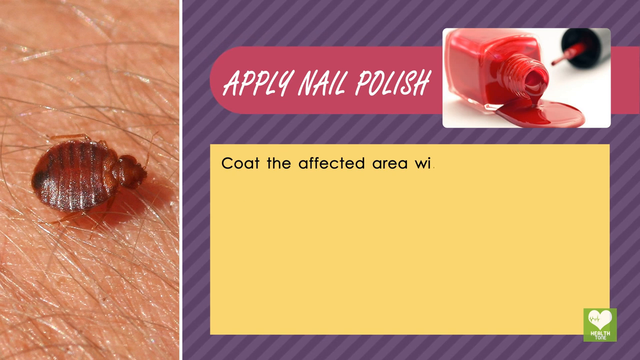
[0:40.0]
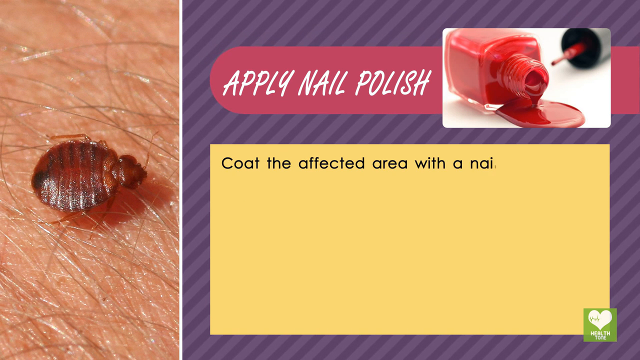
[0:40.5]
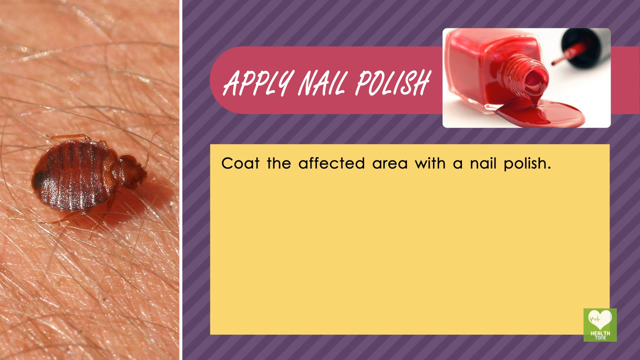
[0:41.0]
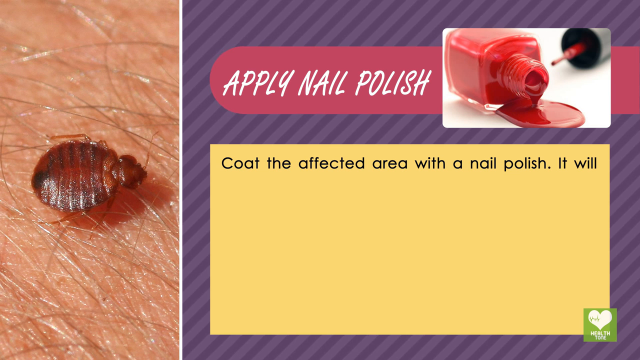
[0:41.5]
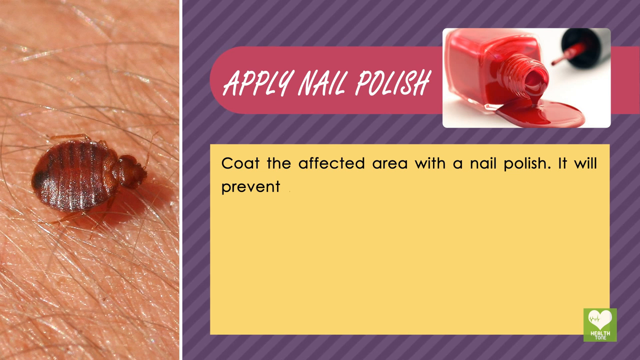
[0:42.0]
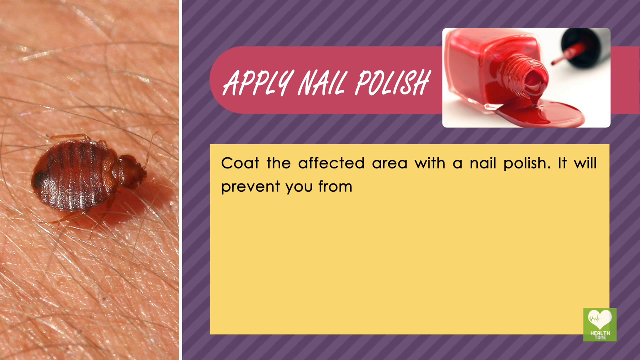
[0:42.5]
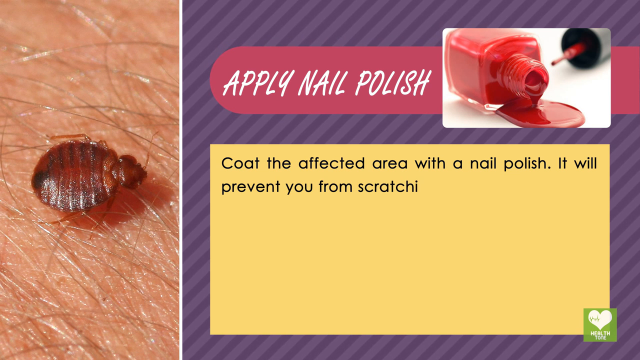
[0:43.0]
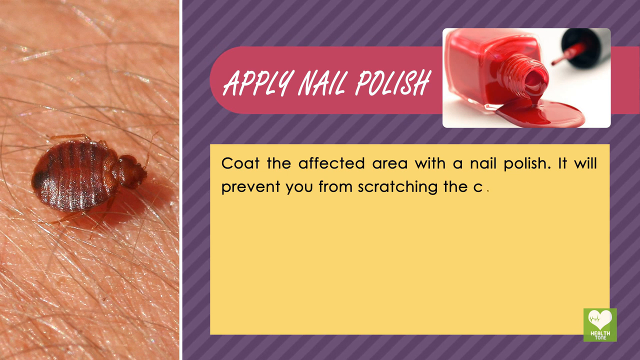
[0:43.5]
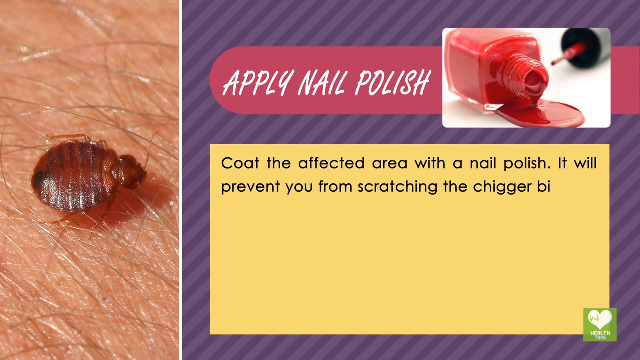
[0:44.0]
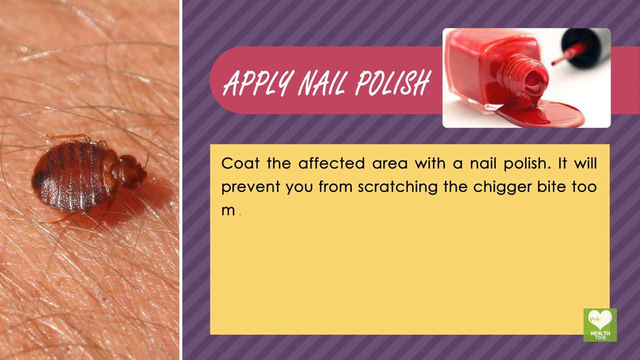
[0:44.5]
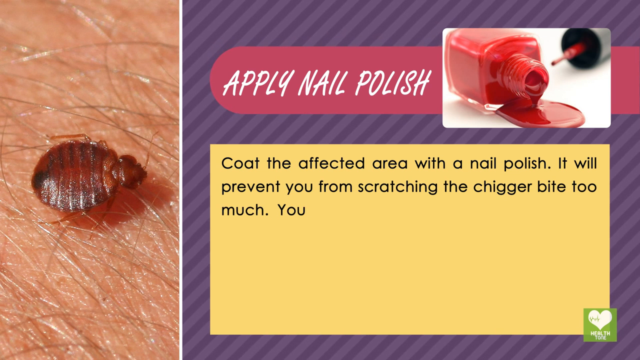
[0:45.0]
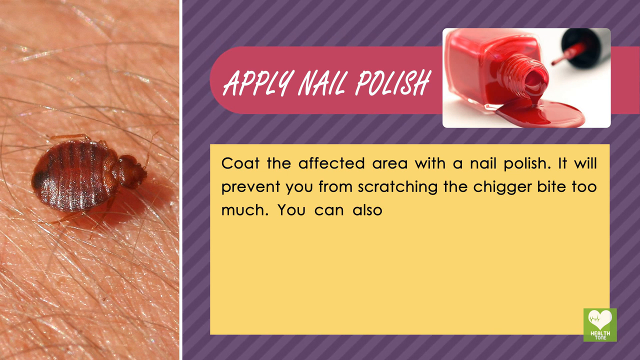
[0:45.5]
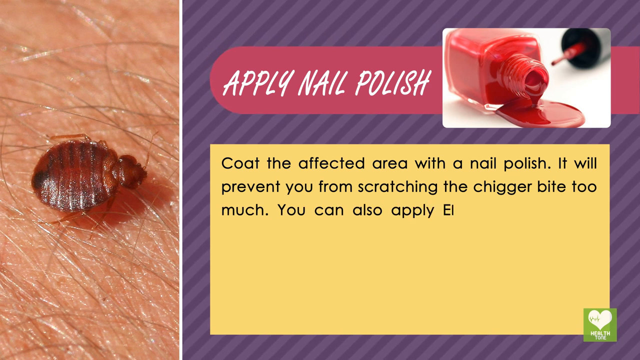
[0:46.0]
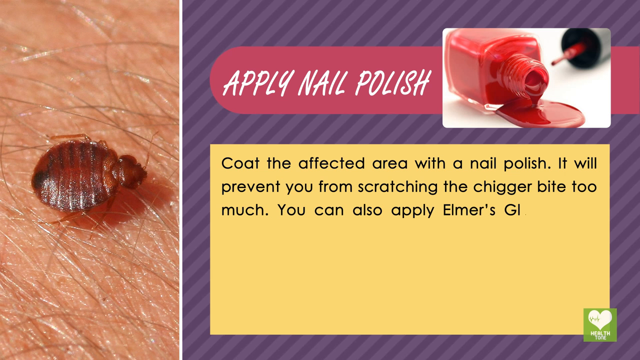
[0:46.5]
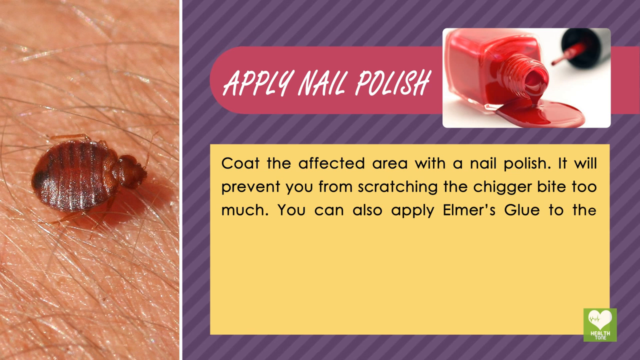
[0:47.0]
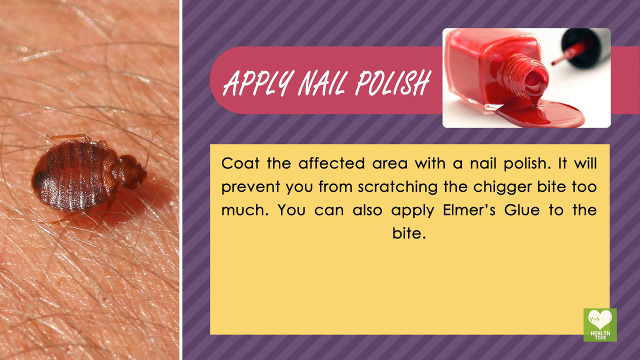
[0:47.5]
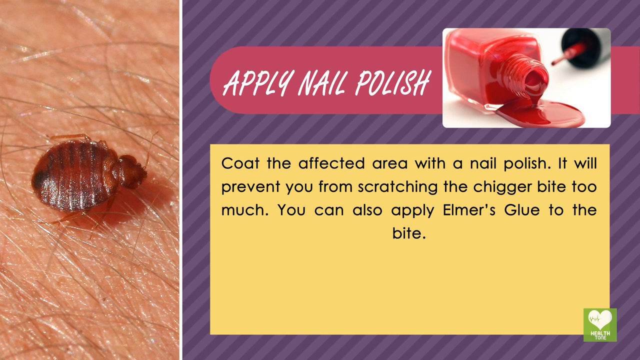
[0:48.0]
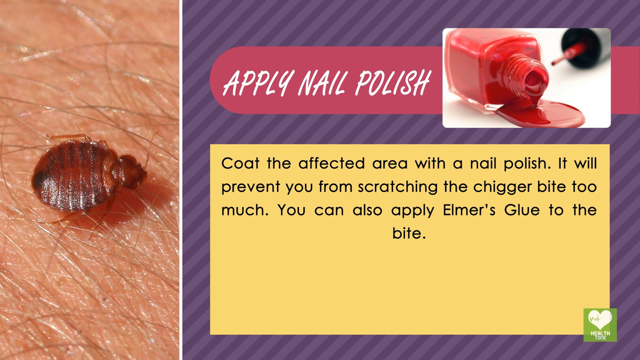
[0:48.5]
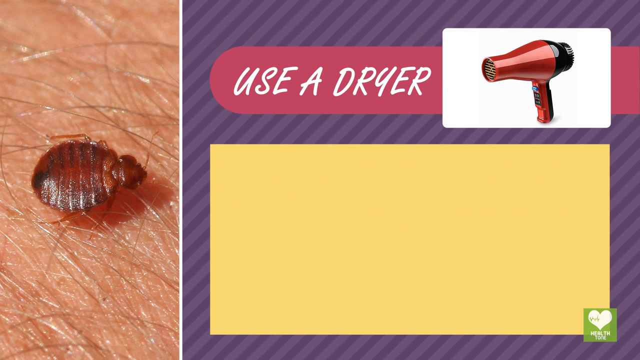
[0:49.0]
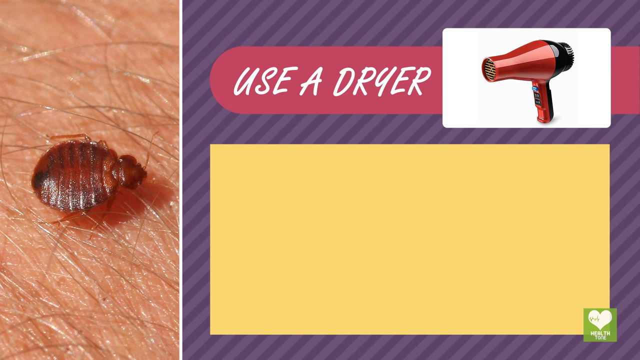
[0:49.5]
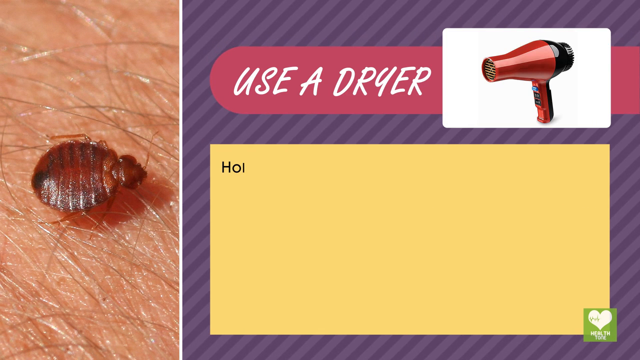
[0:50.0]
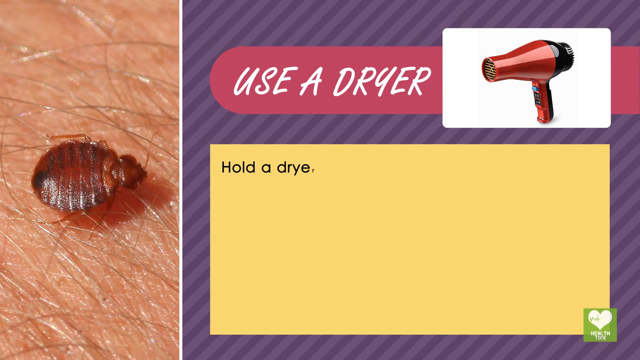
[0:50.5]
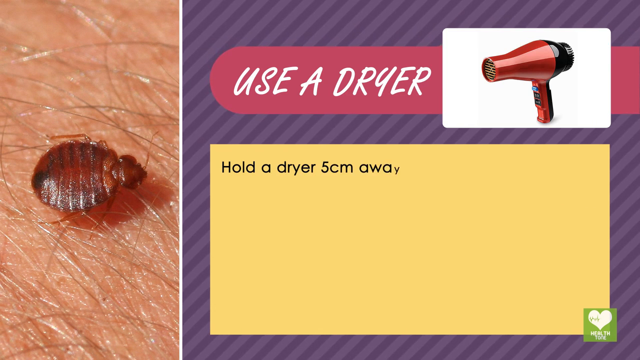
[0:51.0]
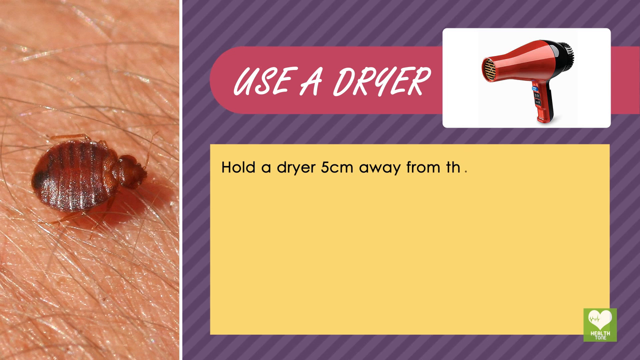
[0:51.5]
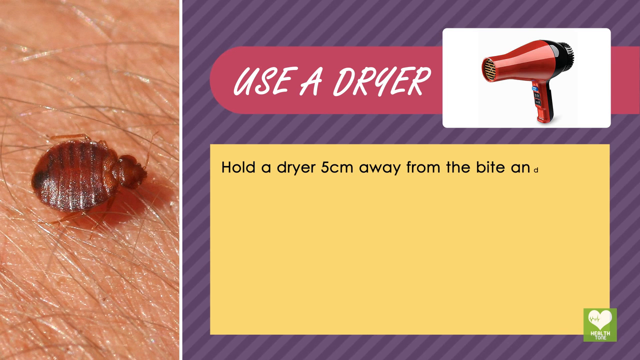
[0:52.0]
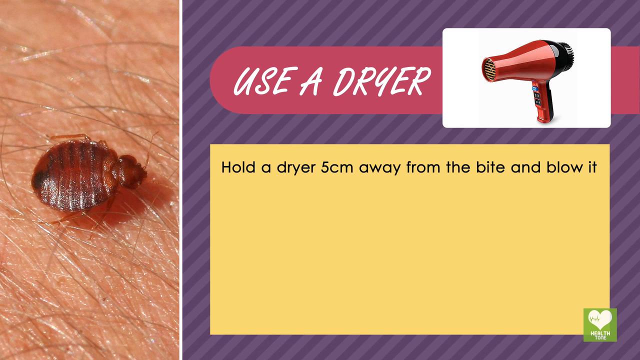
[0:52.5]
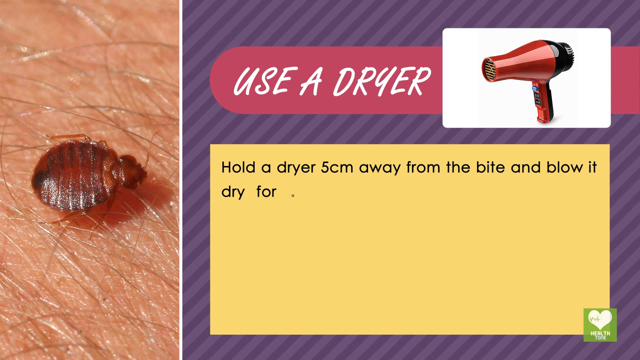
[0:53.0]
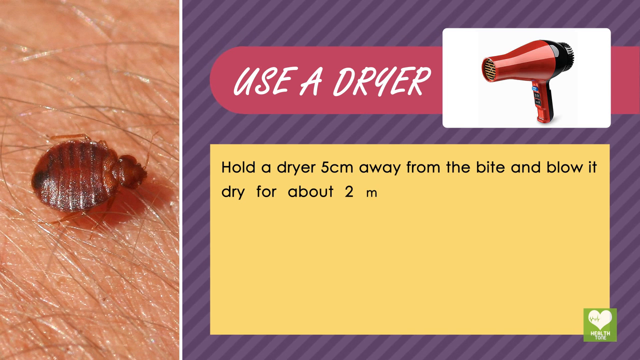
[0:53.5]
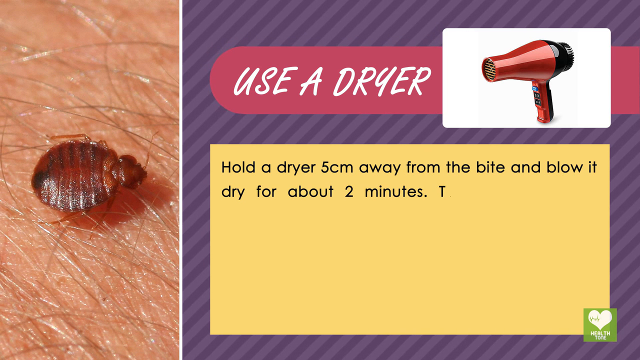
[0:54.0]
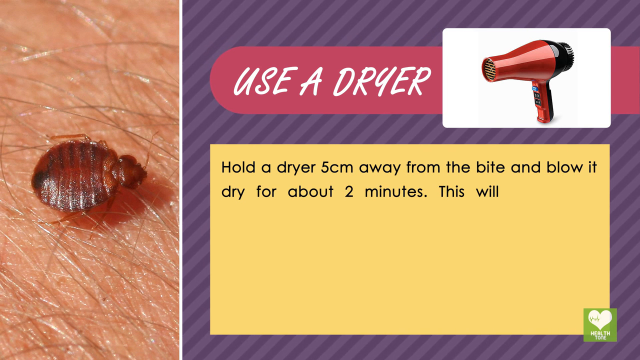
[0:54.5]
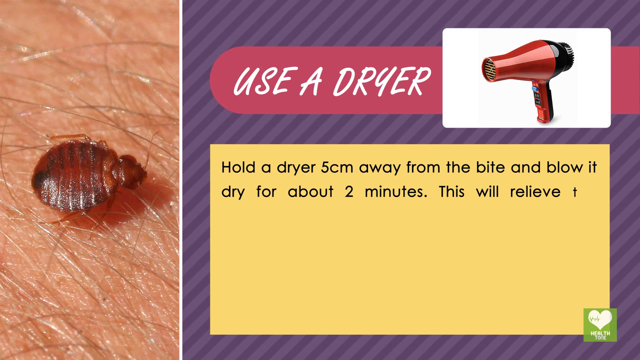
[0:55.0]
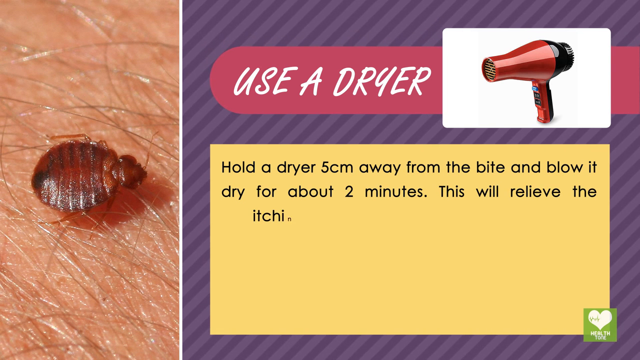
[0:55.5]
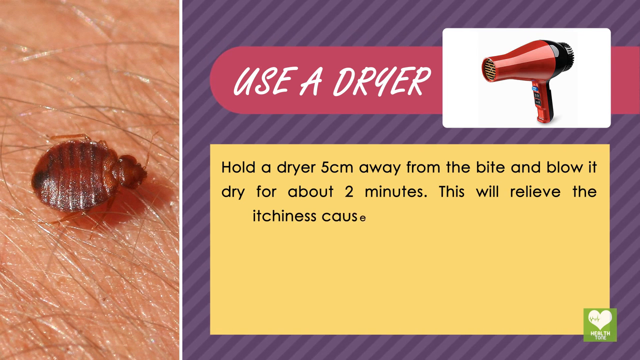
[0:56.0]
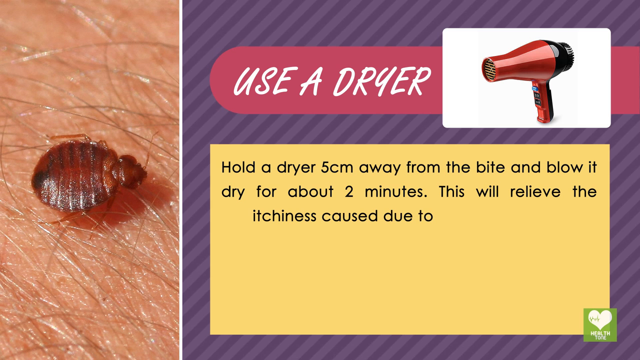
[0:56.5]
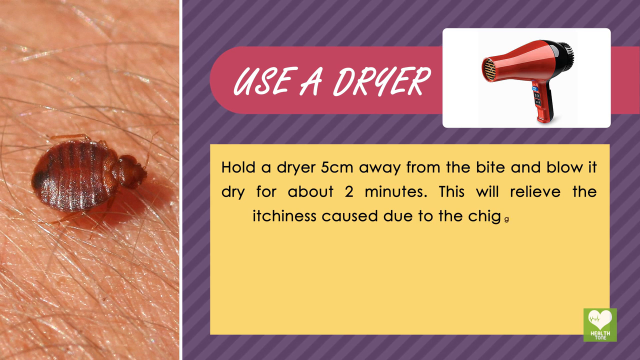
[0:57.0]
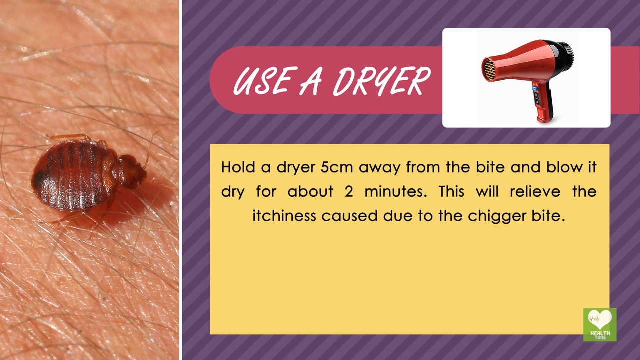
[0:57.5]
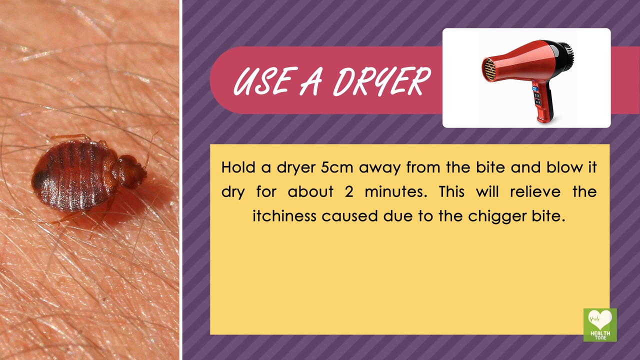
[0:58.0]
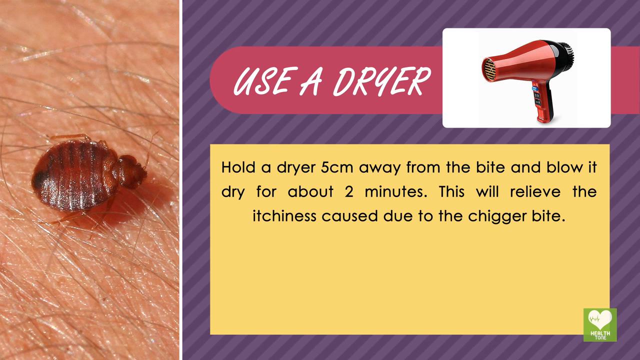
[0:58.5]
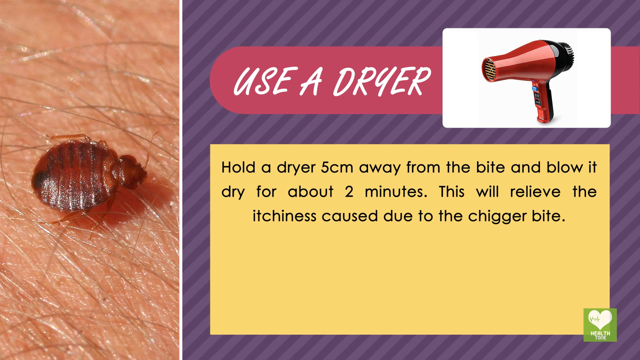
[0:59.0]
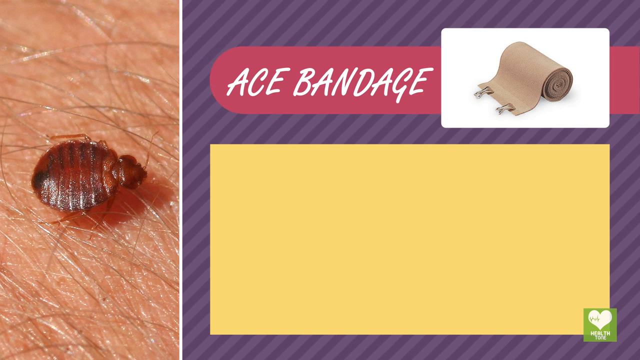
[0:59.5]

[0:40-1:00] The text in the yellow box says: "coat the affected area with a nail polish. It will prevent you from scratching the Chigger Bite too much. You can also apply Elmer's glue to the bite." The next remedy is "use a dryer," which appears in the pink-maroon header at the top. In the image directly to the right of the text is a hair dryer whose front half is red and whose back half looks to be black; it is pointing toward the text. The instructions in the yellow box read: "hold a dryer five centimeters away from the bite and blow it dry for about two minutes. This will relieve the itchiness caused due to the chigger bite." The next remedy is ace bandage, with the text "Ace Bandage" in the heading. The image directly to the right of the header text shows a rolled-up tan ace bandage with two snaps on its loose, left-hand side.